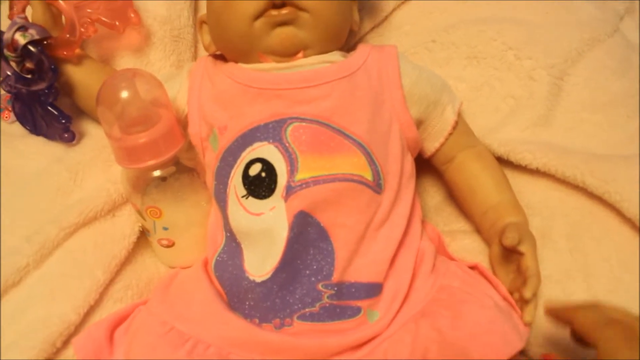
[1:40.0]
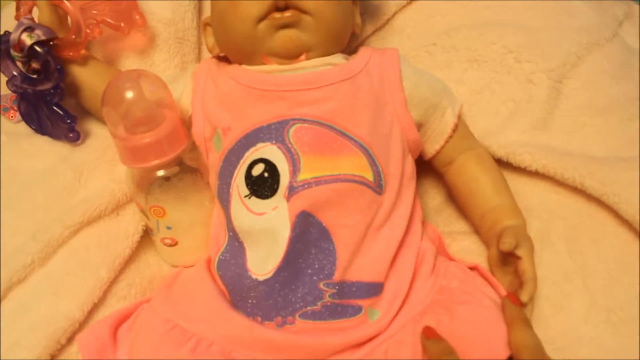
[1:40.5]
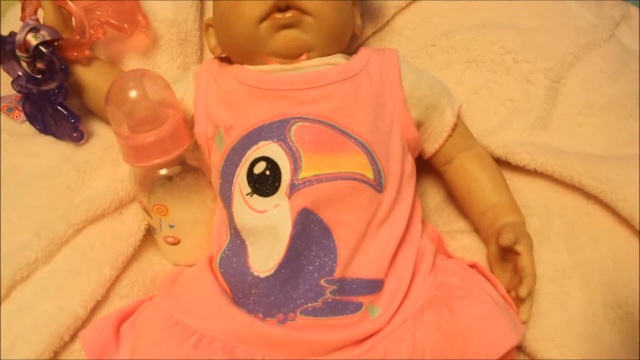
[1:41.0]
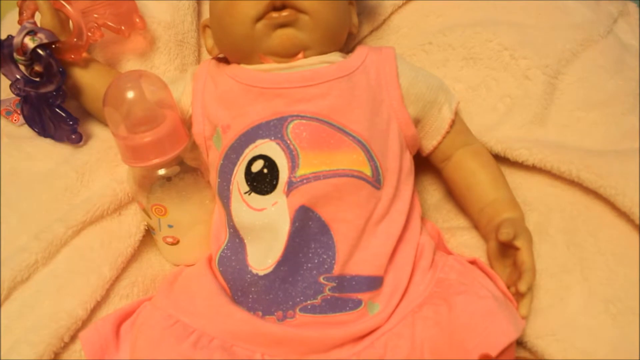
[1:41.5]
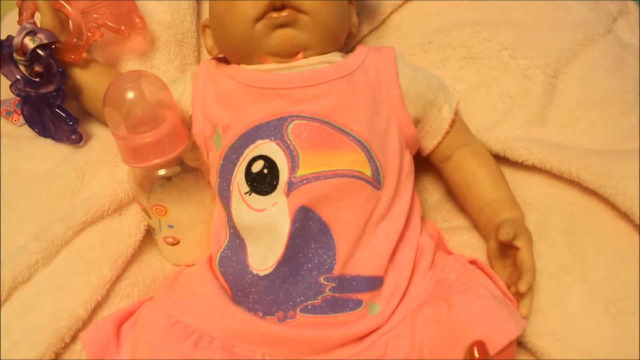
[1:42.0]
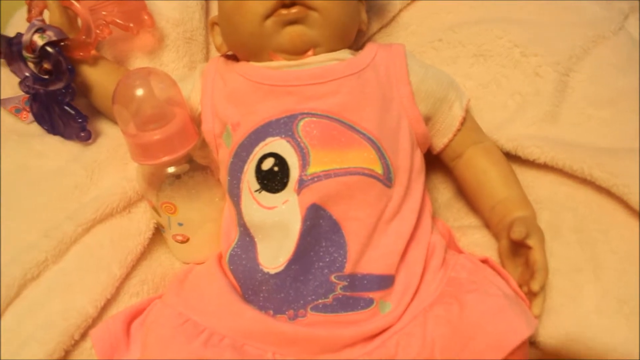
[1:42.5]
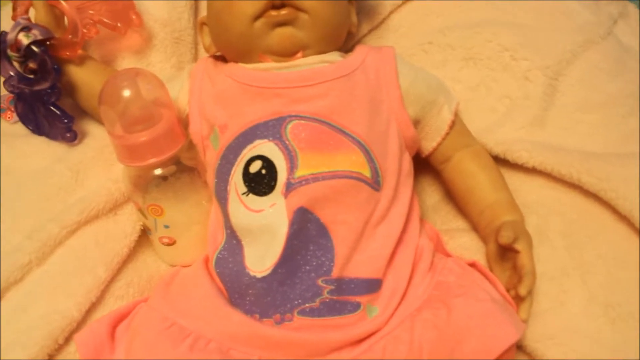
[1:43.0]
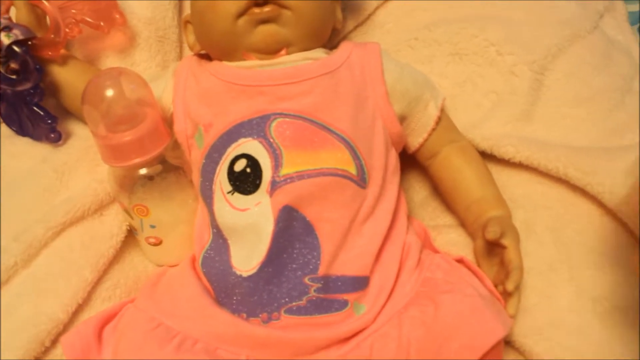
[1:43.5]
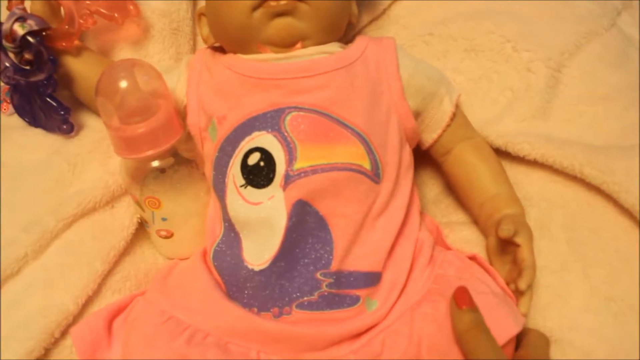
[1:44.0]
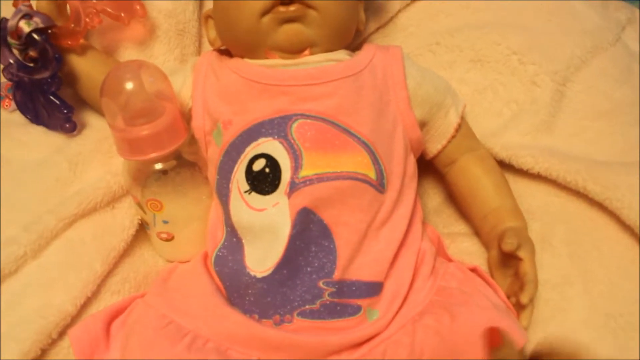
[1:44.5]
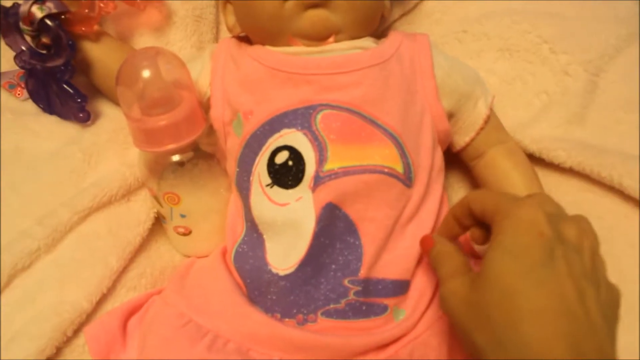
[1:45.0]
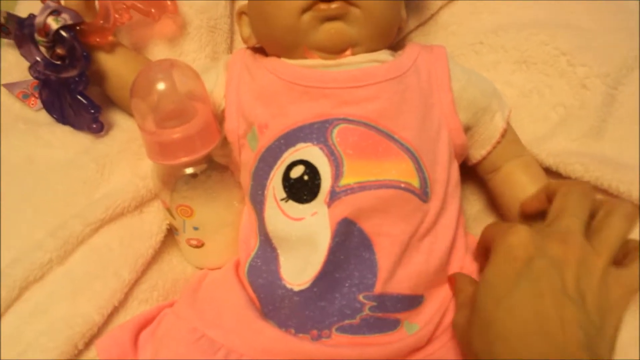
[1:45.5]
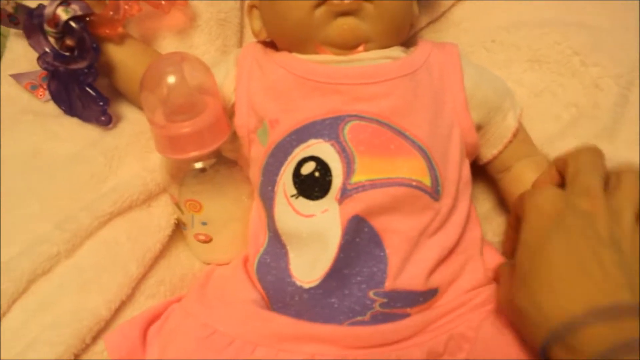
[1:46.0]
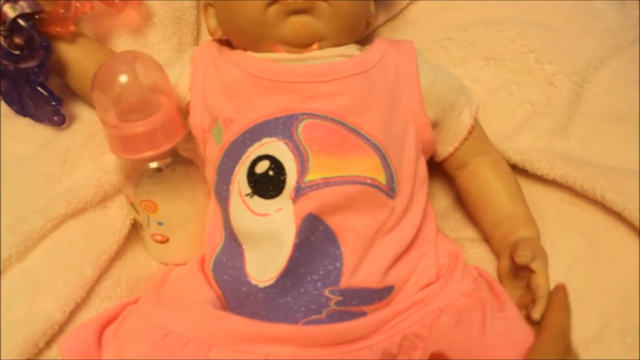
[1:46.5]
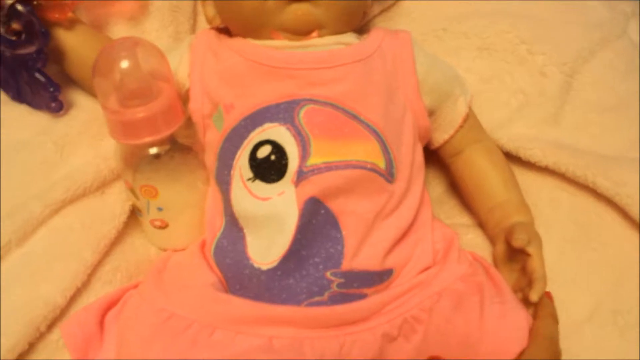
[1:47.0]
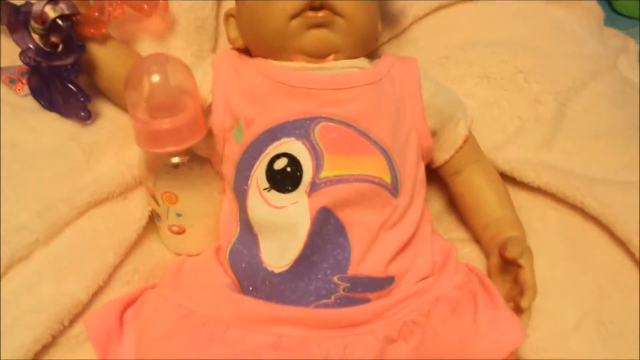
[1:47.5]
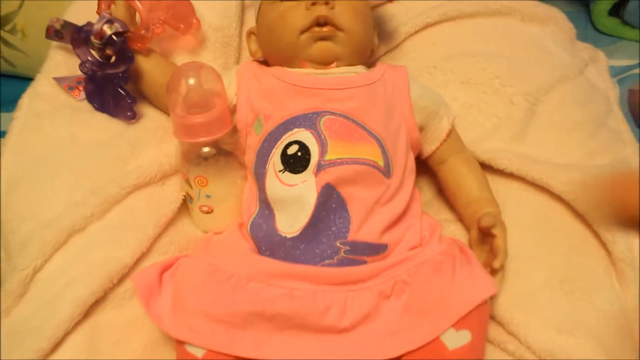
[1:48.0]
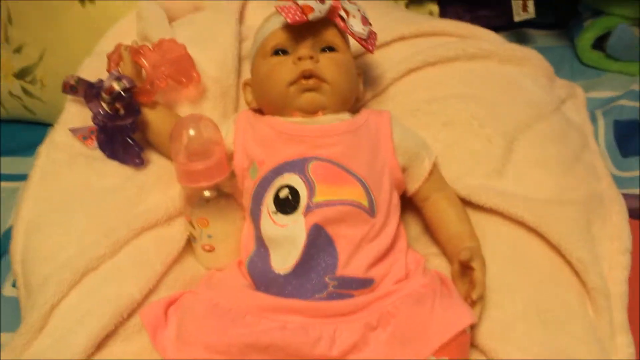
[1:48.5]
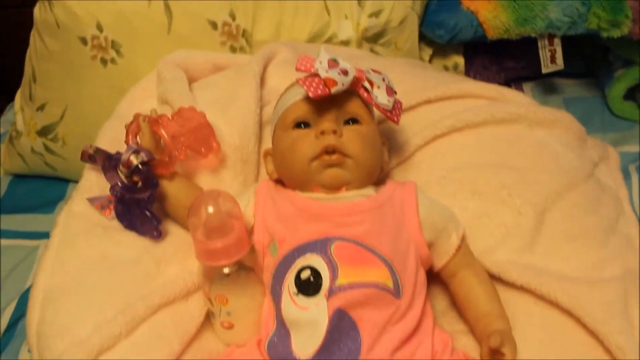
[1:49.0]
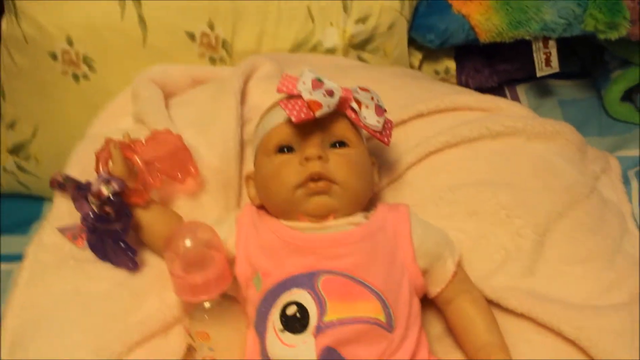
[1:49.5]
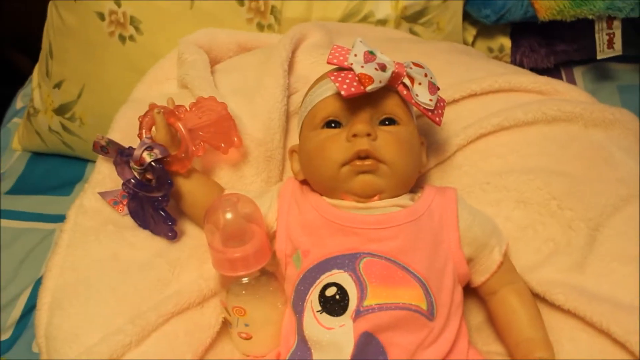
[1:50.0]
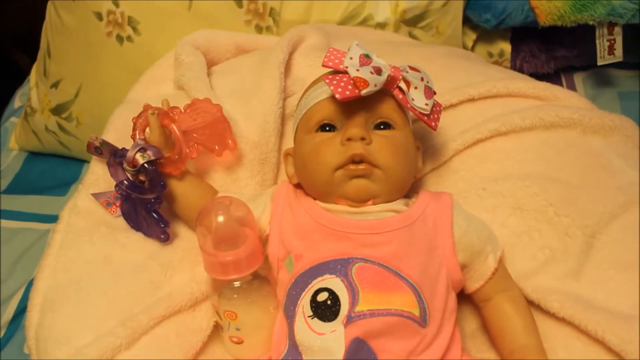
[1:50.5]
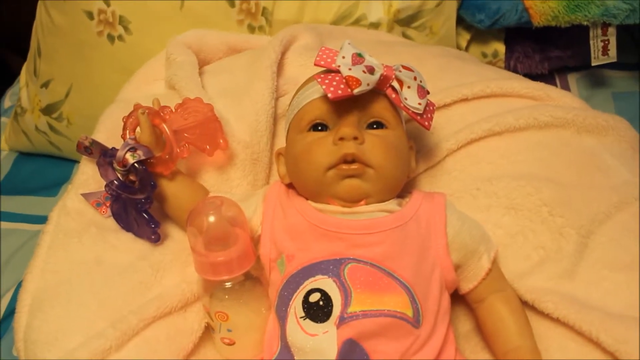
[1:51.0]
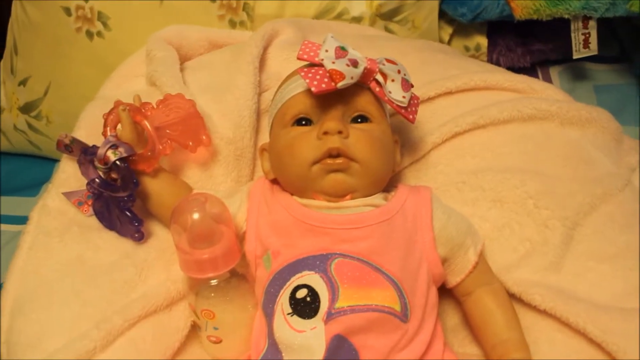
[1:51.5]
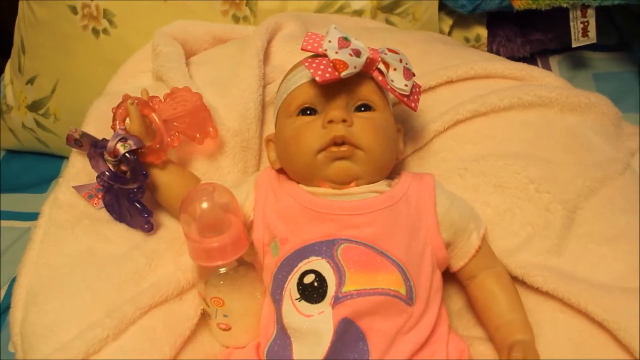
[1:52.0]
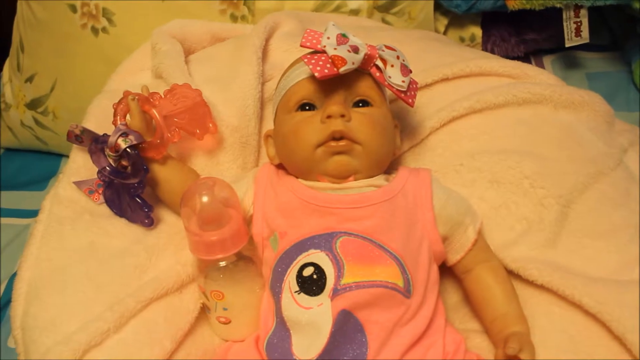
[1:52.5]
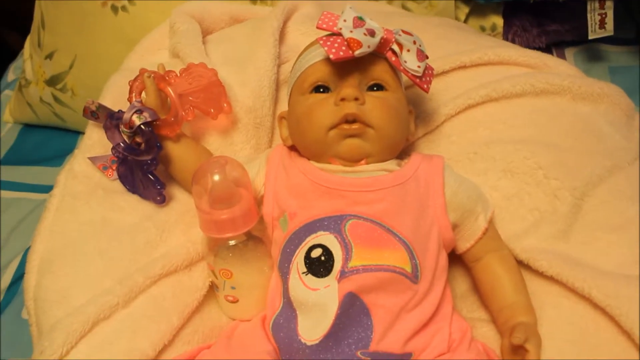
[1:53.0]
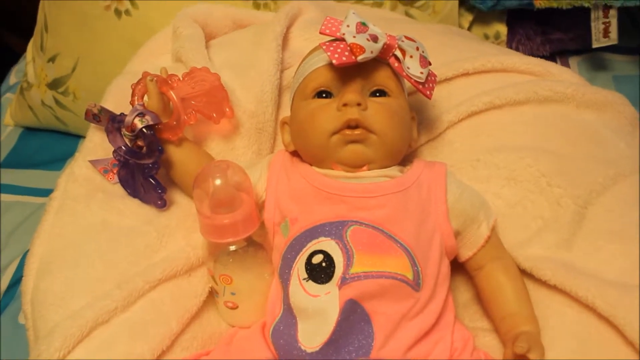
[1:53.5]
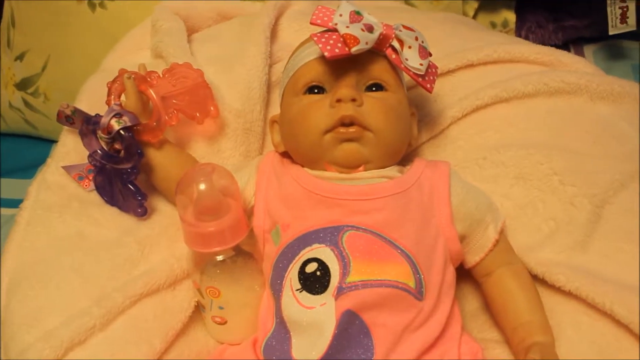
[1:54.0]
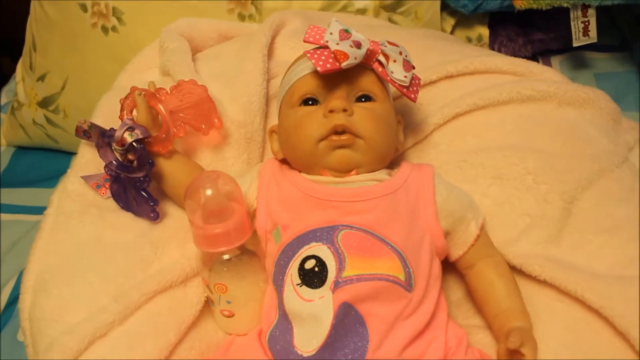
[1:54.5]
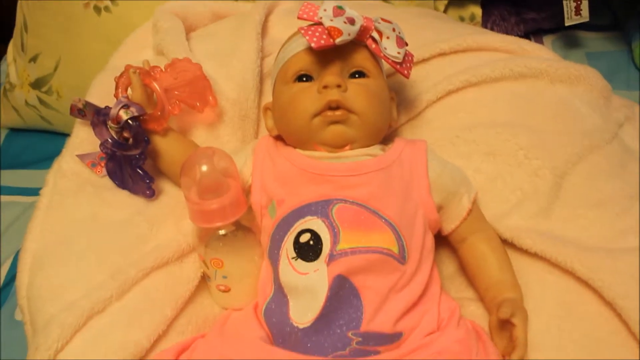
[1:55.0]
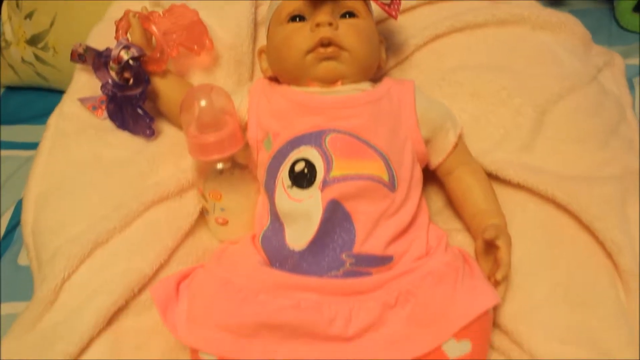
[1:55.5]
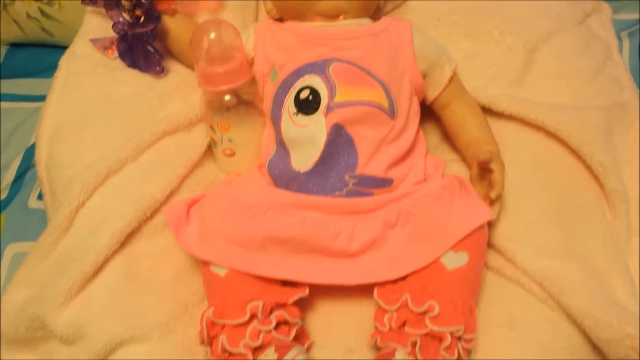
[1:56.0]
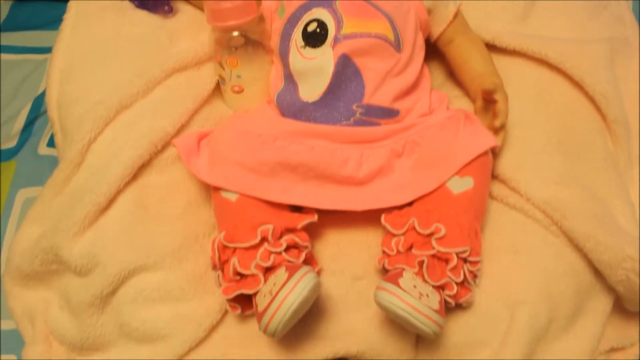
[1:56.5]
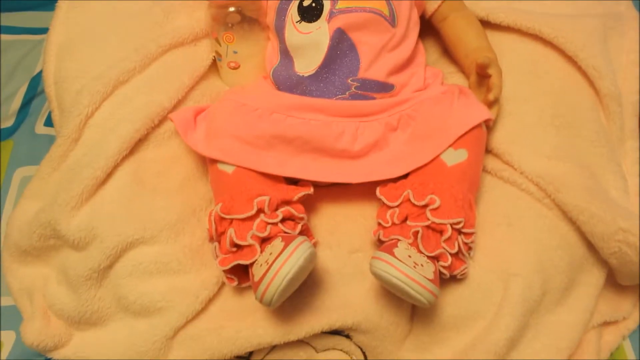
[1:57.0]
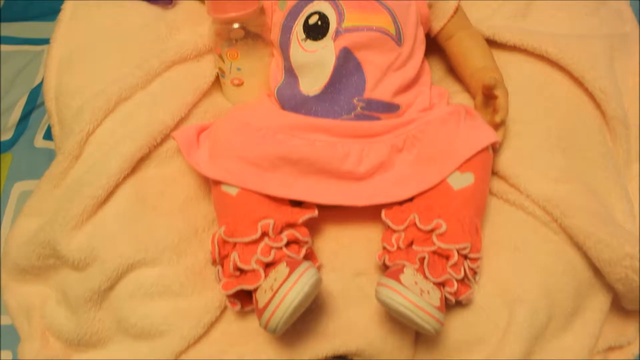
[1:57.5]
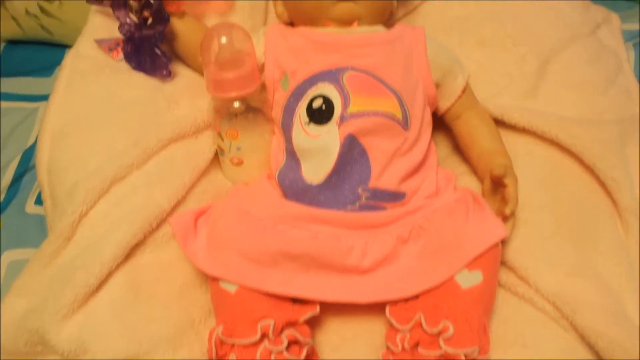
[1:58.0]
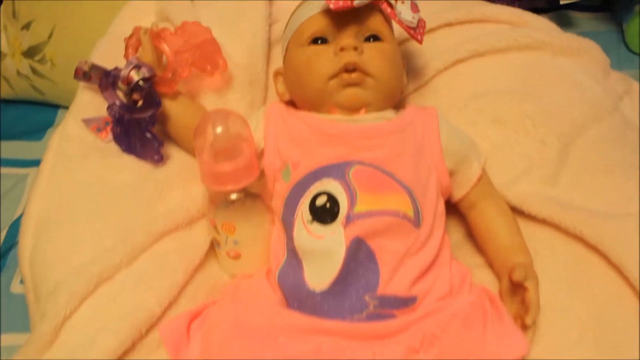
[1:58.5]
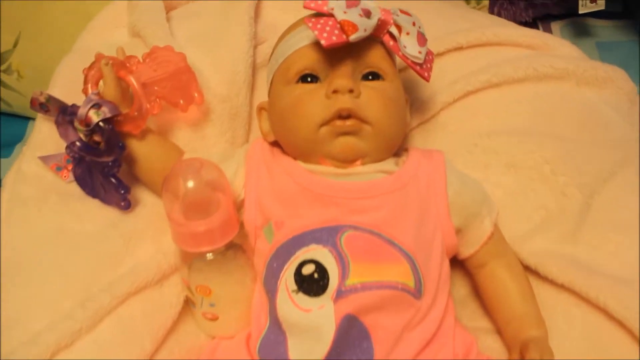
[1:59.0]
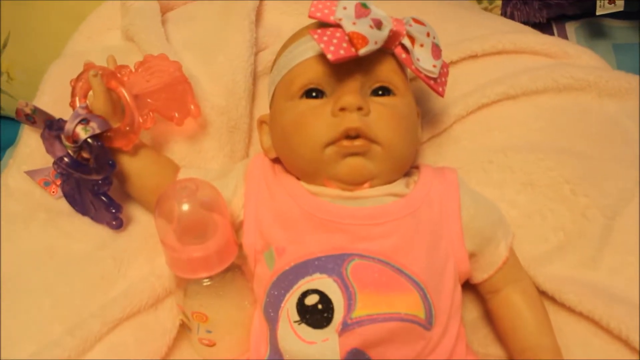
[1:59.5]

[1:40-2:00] The person holds the camera and shows off the baby doll's clothes, with their right hand in view, and they look to be talking. A plastic bottle of milk is to the left of the doll, which wears a pink vest with a purple and white flamingo design. The view widens and pans up and down the doll, which is bald and has a pink bow, a white headband, pink leg warmers and pink shoes. The doll is on a blanket on top of a bed, with possibly a pillow in the background. The person has pink fingernails and two bracelets on their right wrist.